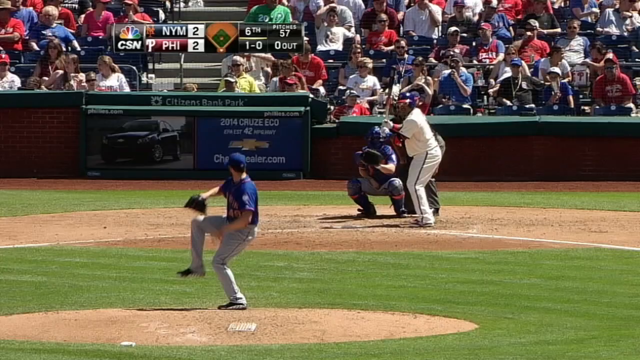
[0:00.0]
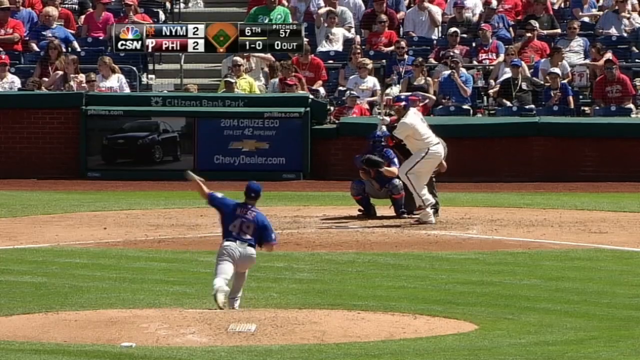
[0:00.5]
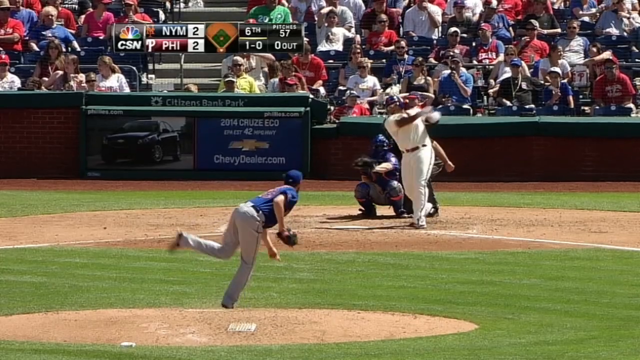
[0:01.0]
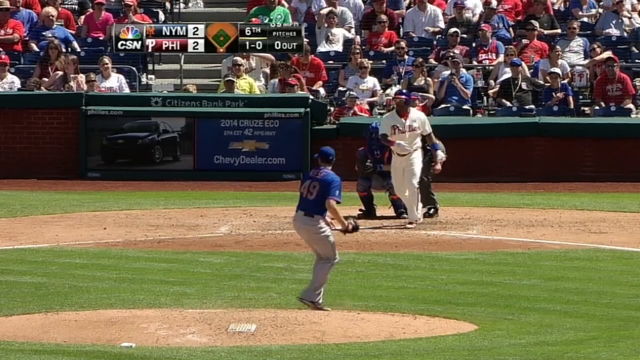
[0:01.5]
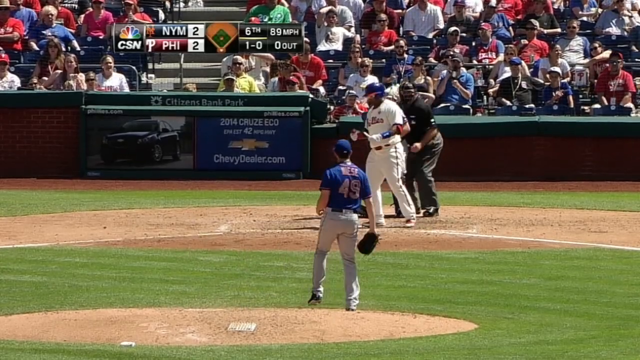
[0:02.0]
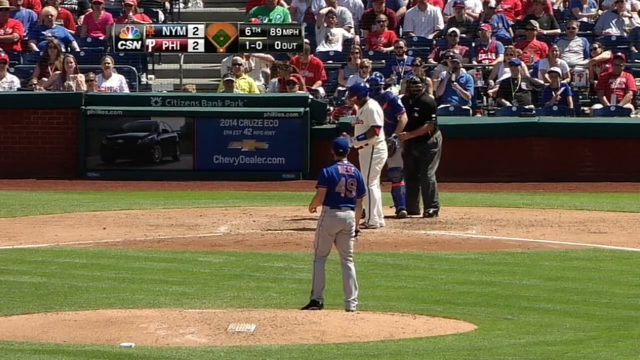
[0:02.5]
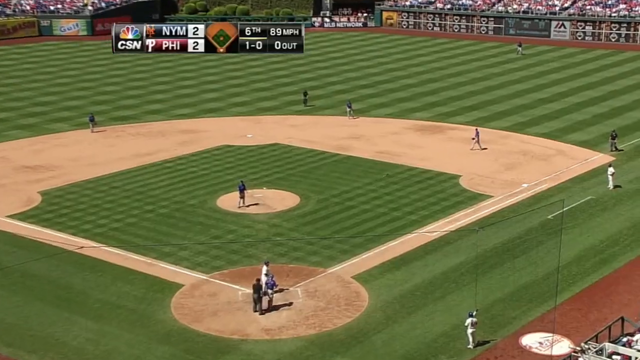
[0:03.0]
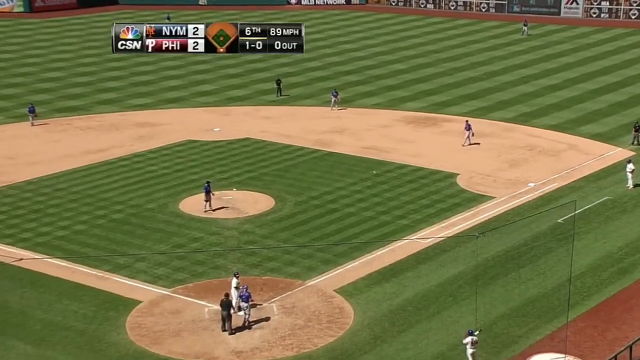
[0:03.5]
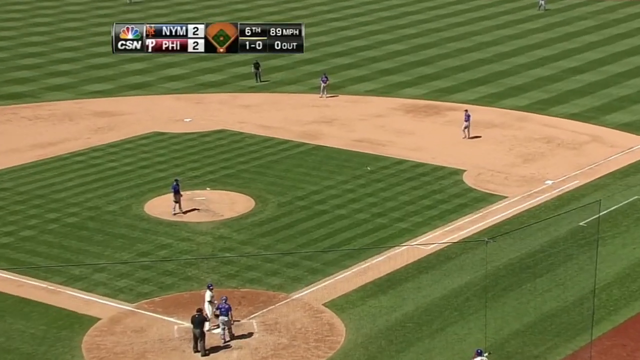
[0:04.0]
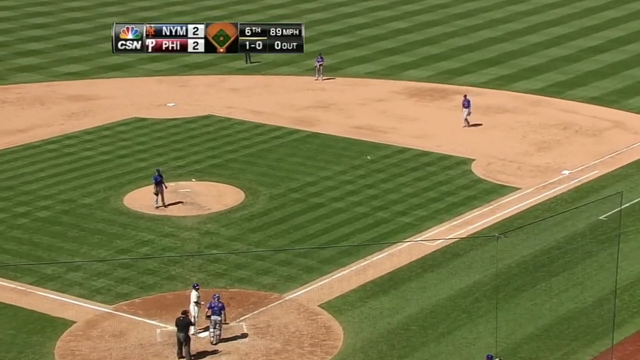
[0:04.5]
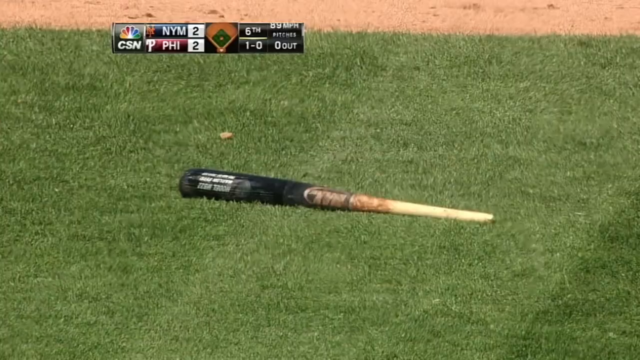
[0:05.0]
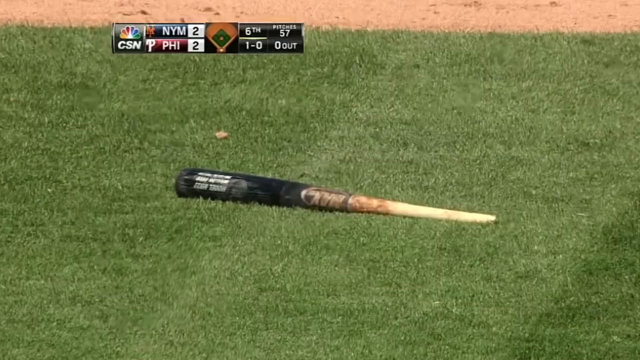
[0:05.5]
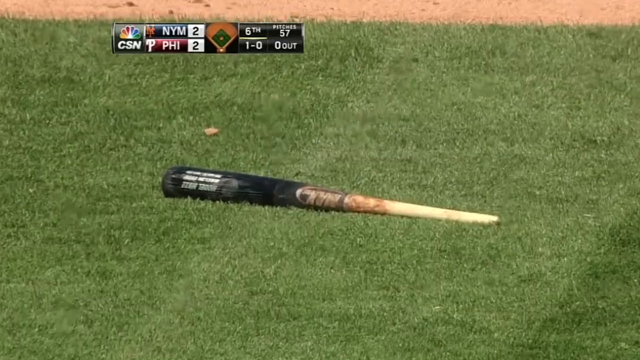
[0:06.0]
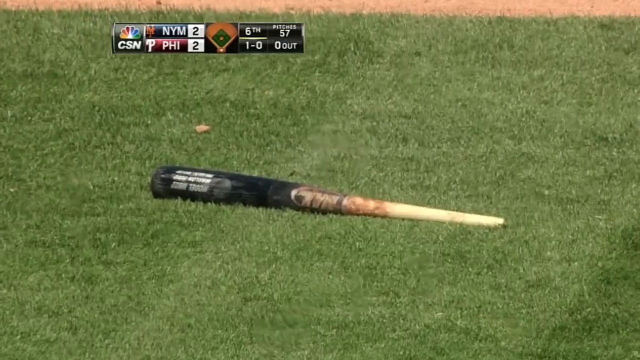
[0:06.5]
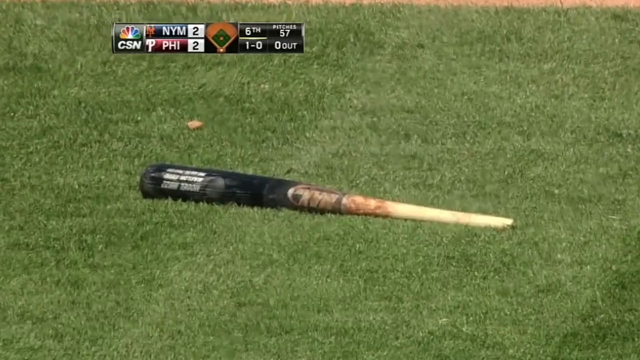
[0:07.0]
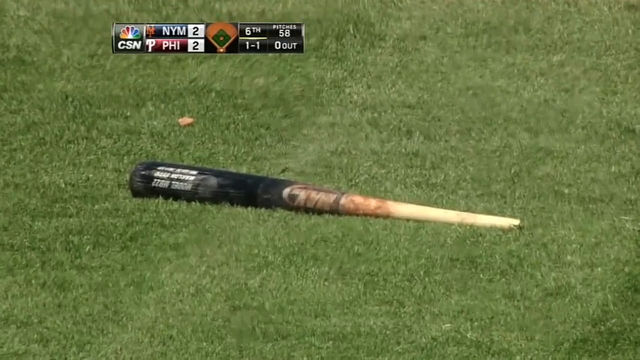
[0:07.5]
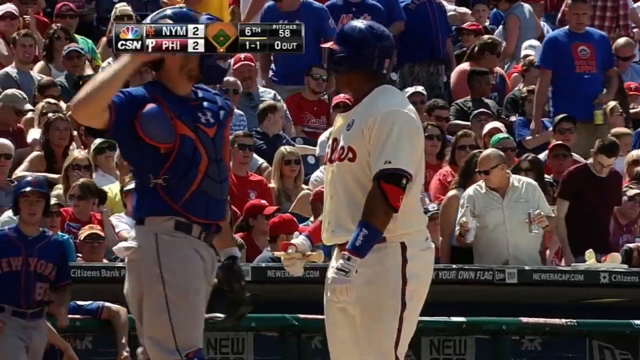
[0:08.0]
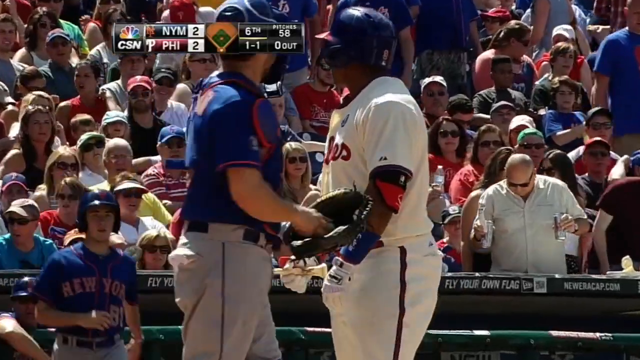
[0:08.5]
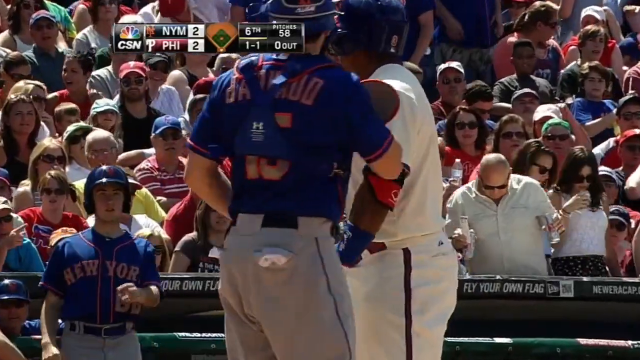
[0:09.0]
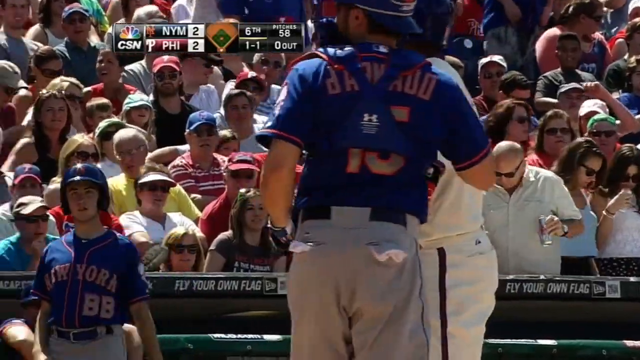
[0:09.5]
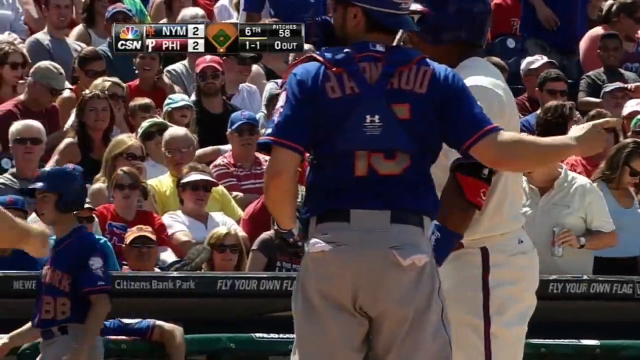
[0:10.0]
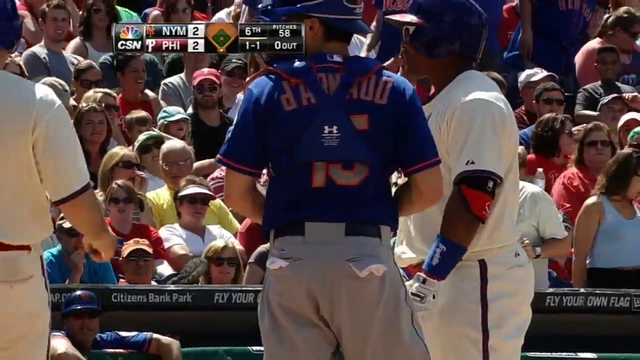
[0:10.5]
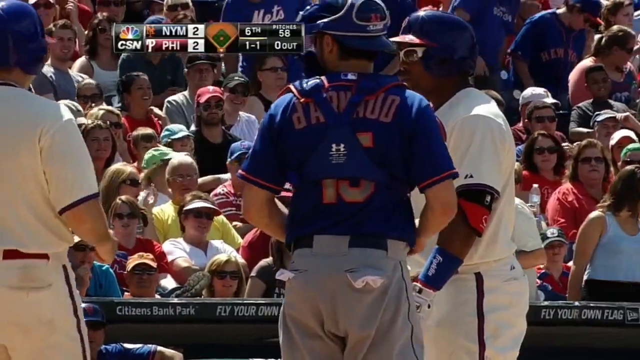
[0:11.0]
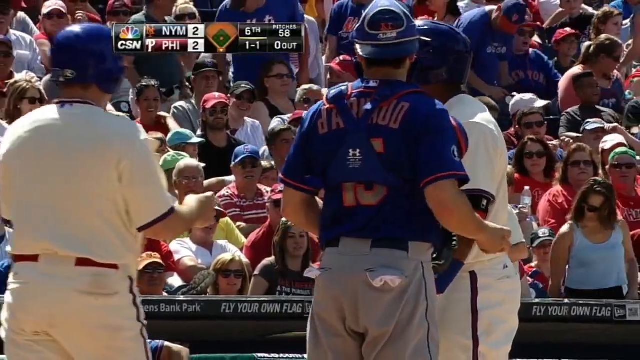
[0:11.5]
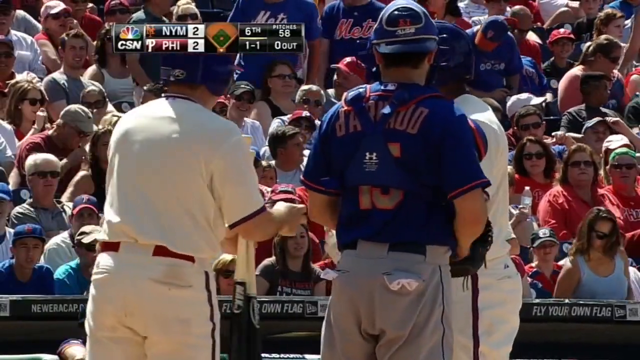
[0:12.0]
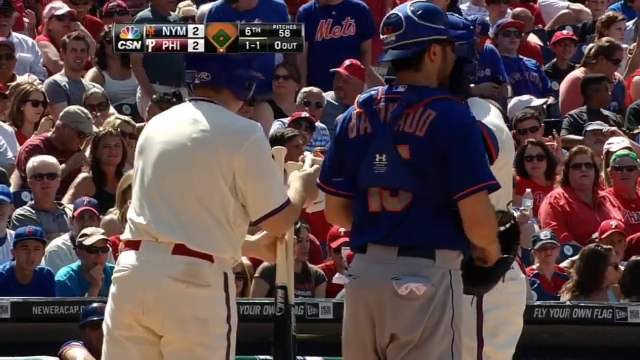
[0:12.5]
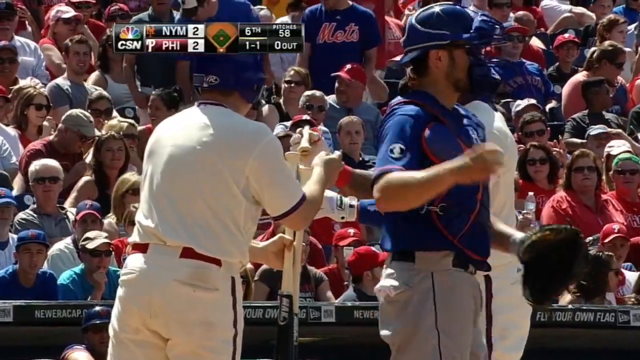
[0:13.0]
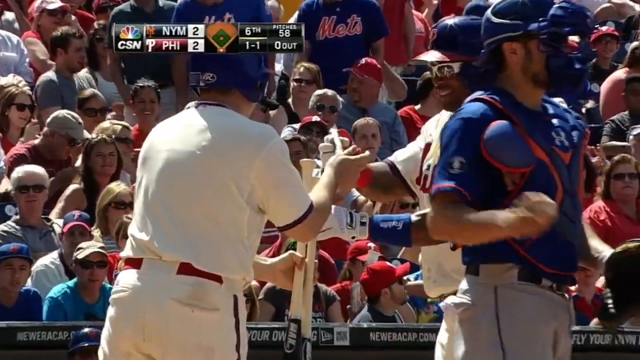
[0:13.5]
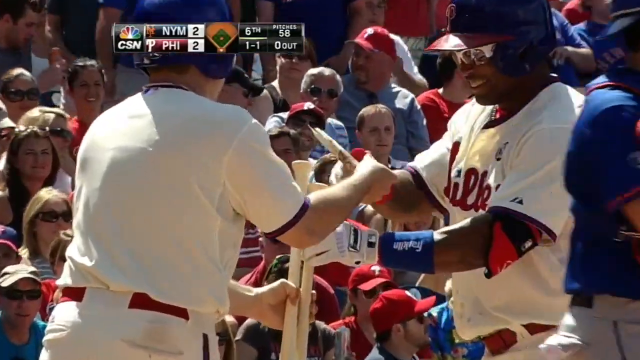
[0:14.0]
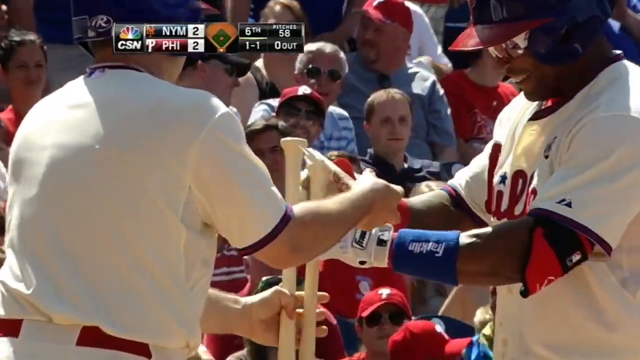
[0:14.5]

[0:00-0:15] A baseball game is shown, with the title "Bird swings and misses, but breaks his..." A player in gray pants, a blue shirt and a blue hat pitches the ball to a team wearing white jerseys and white pants. The batter swings and appears to miss, but the bat still breaks in half, and the top half flies out into the infield to the right of the pitcher, toward first base. The batter stares down at the handle in his hand, sort of in disbelief, and then the bat boy comes over, gives him a new bat and takes the broken piece. The white team has the word "Phillies" on the front of their jerseys, and the blue team's jerseys say "New York" on the front, so this appears to be the Philadelphia Phillies versus the New York Mets.